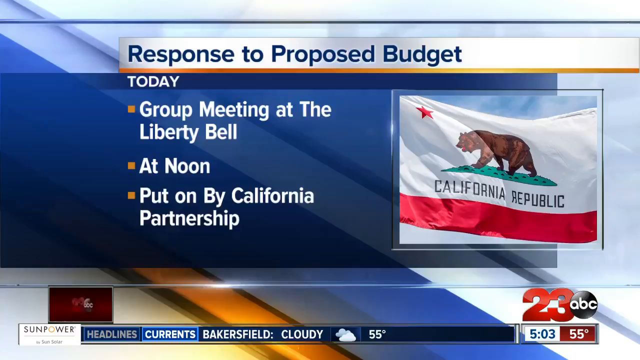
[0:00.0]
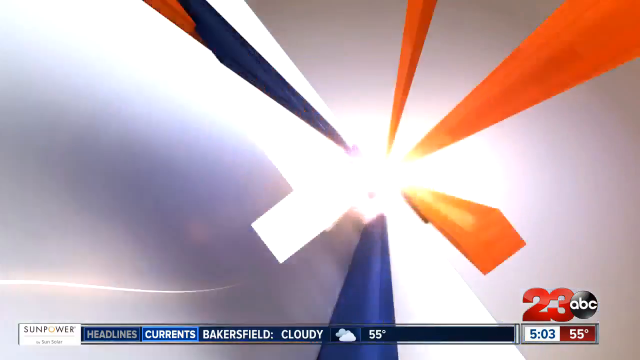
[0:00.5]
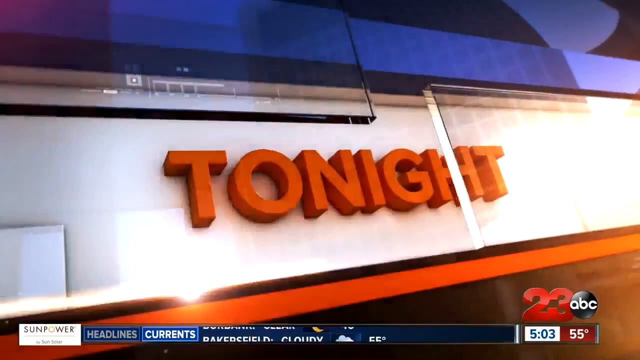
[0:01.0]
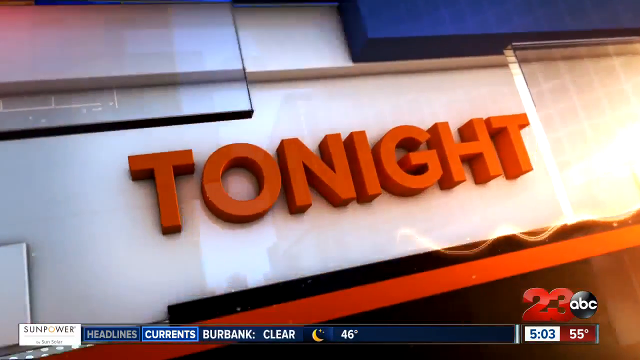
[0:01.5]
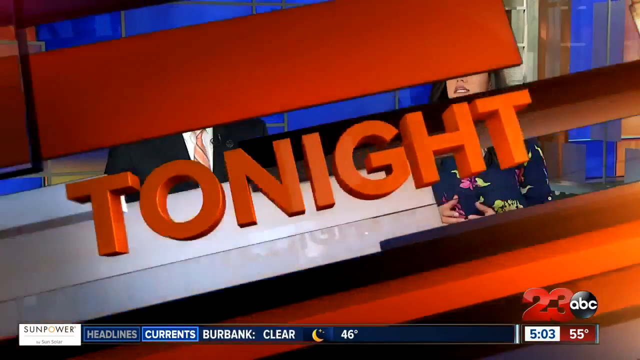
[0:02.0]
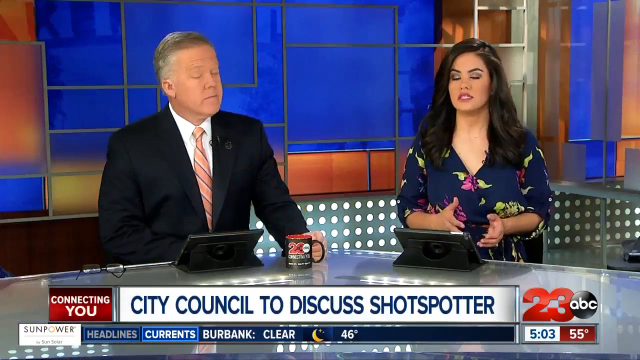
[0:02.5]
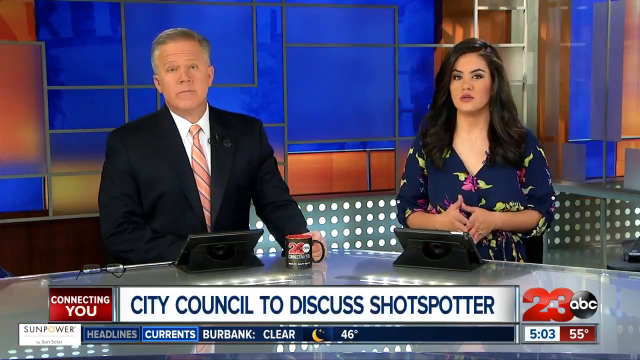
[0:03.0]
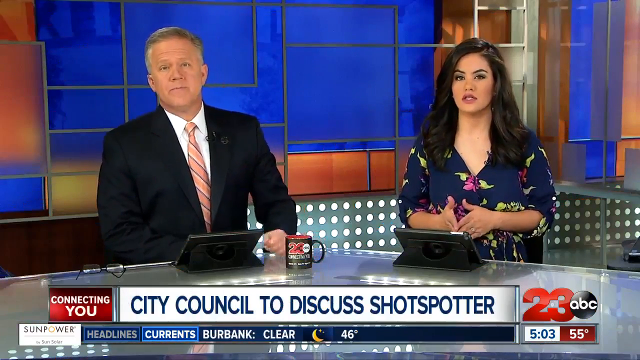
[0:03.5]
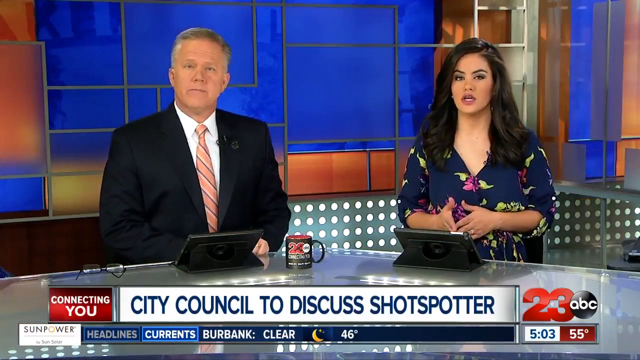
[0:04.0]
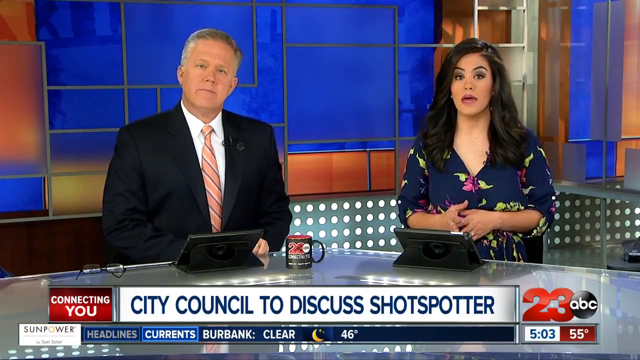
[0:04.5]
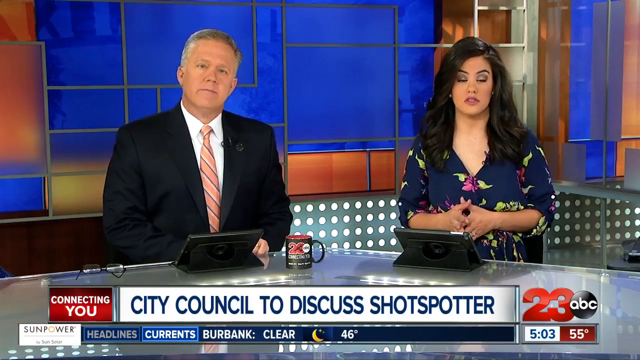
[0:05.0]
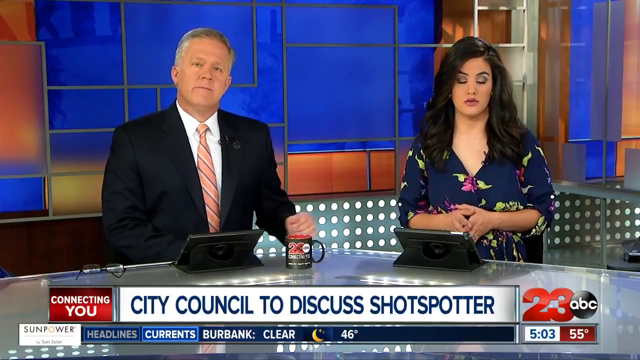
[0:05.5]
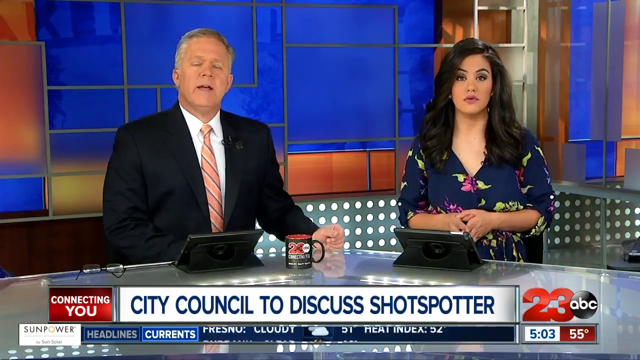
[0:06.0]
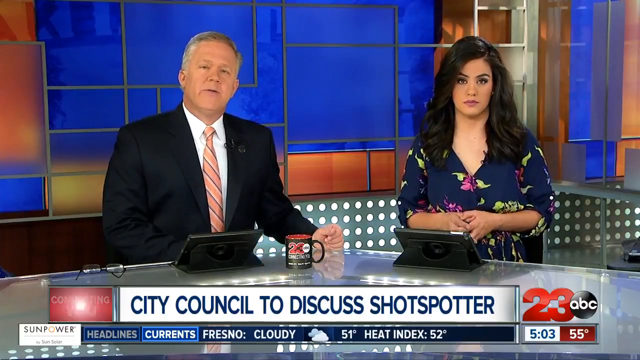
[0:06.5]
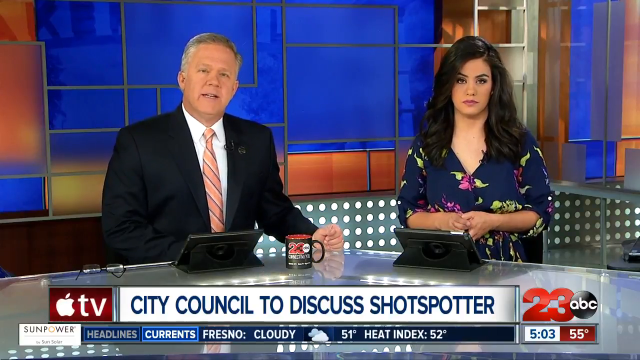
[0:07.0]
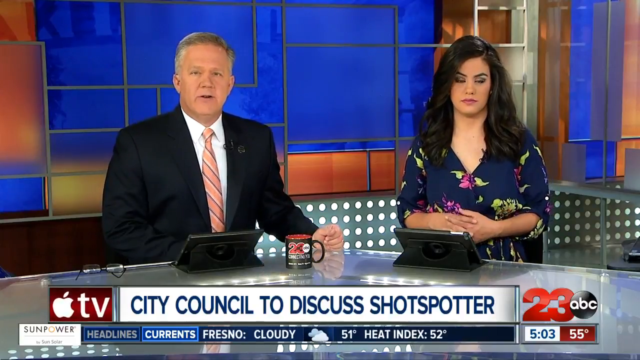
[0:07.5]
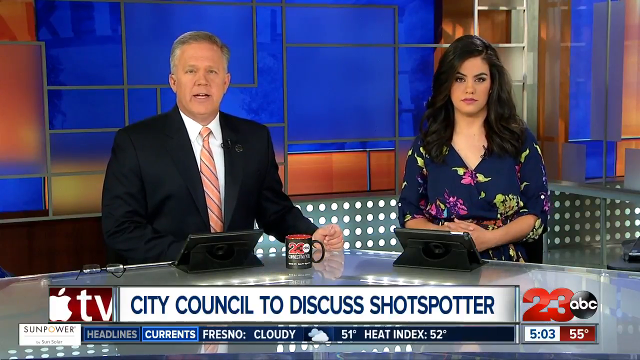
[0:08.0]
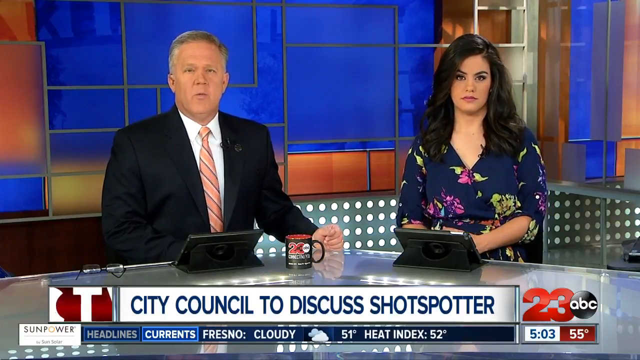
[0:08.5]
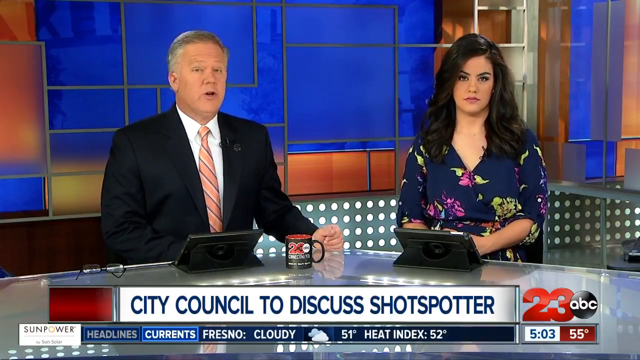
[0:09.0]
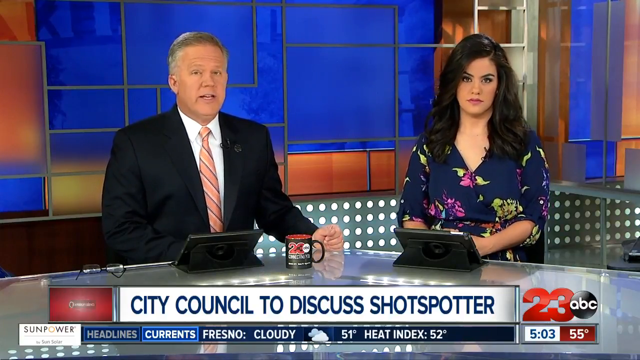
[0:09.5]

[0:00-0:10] A news report opens with text reading "response to proposed budget," stating that today there is a group meeting at the Liberty Hall or Liberty Bell, happening at noon and put on by California Partnership. A transition follows with the word "tonight," and then the two main news hosts appear: a man on the left and a woman on the right. The man wears a black vest with a tie that is sort of orange, yellow and dark blue. The woman has long black hair and wears a sort of dark blue dress with leaves and flowers on it.